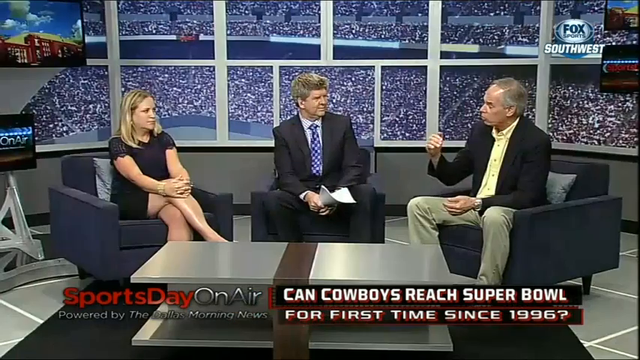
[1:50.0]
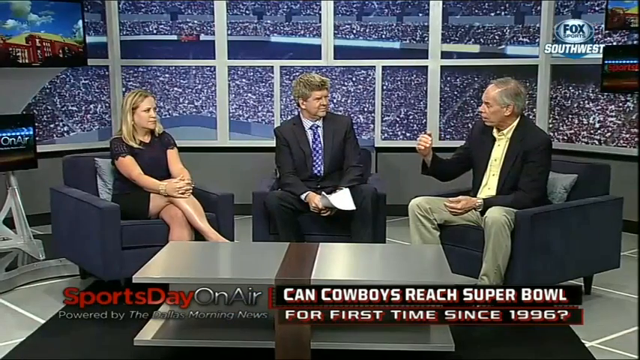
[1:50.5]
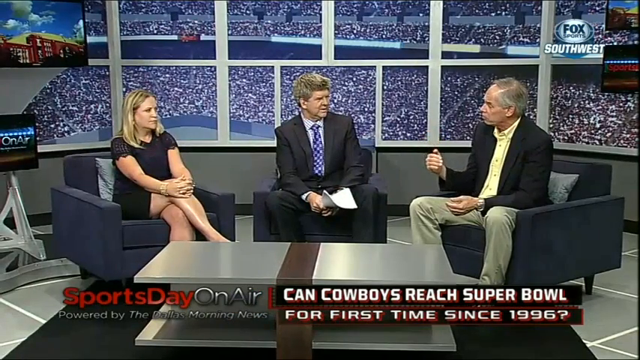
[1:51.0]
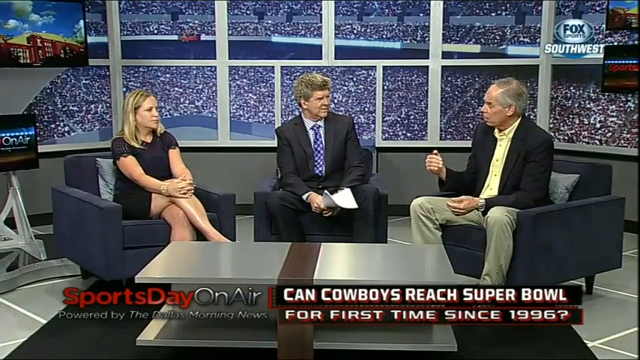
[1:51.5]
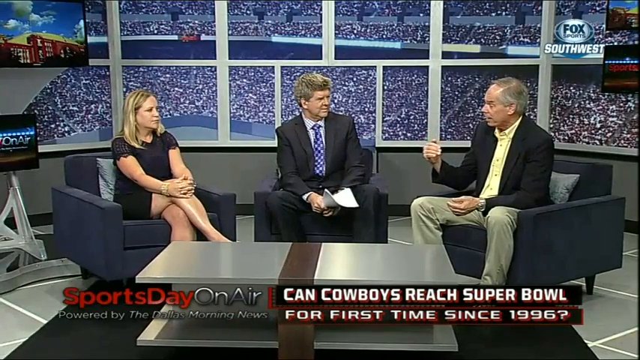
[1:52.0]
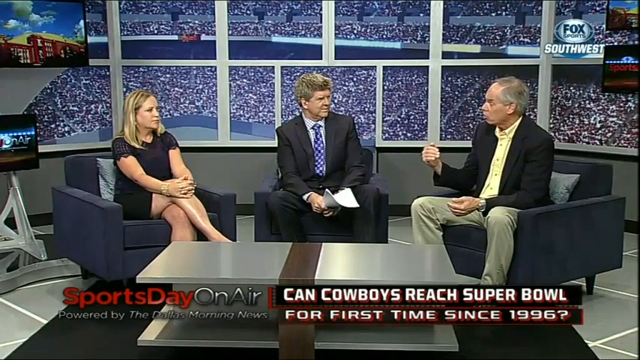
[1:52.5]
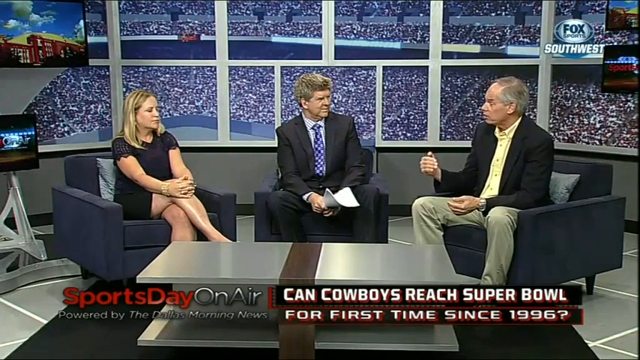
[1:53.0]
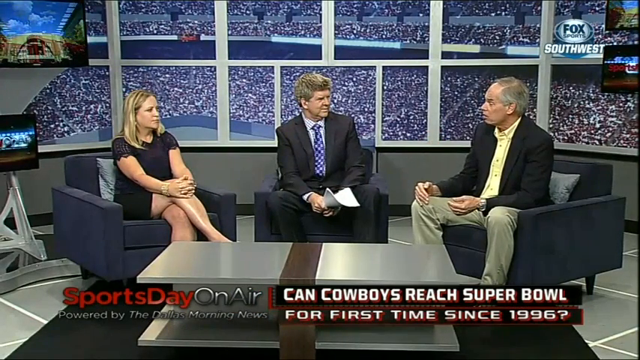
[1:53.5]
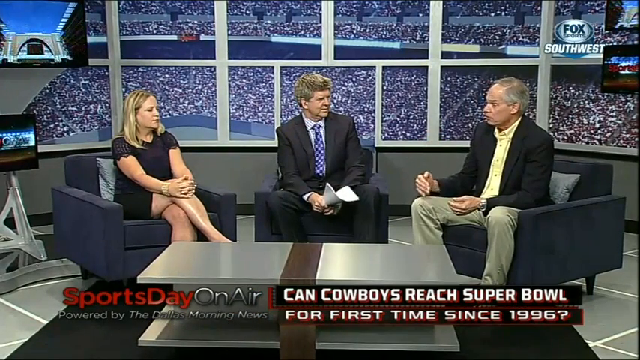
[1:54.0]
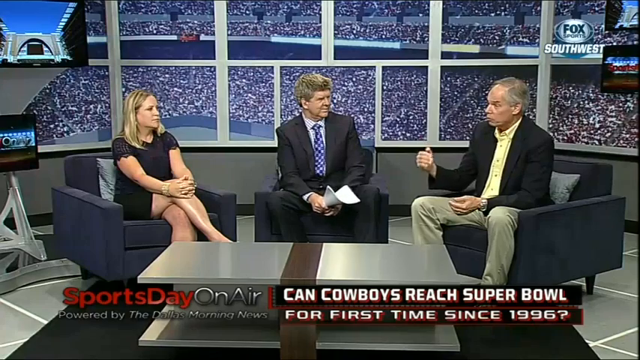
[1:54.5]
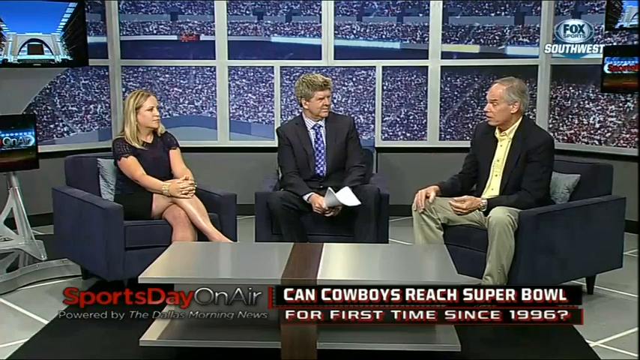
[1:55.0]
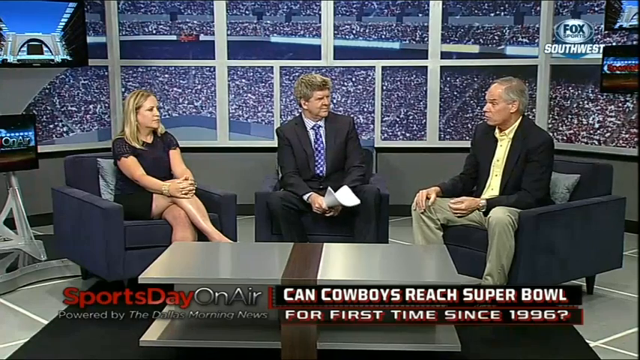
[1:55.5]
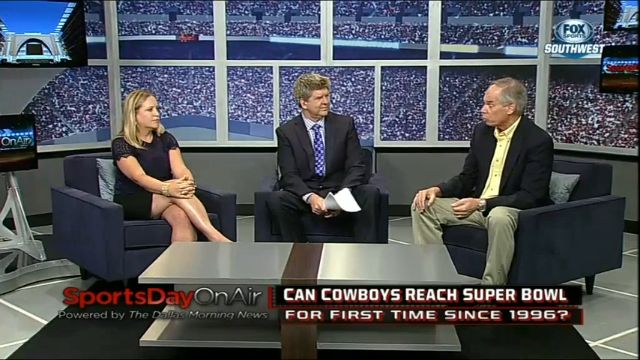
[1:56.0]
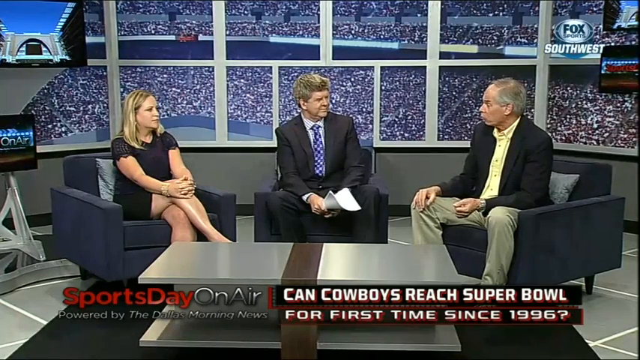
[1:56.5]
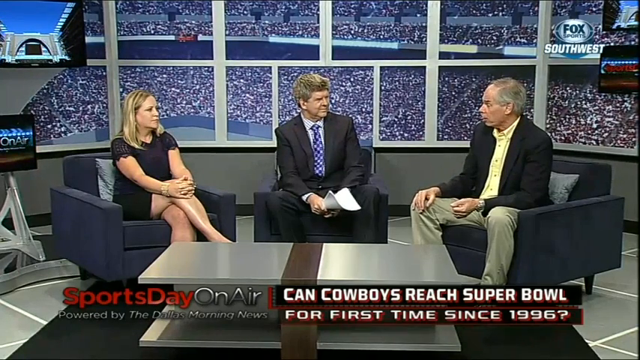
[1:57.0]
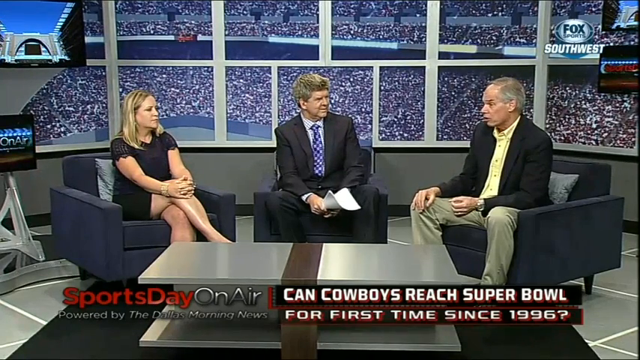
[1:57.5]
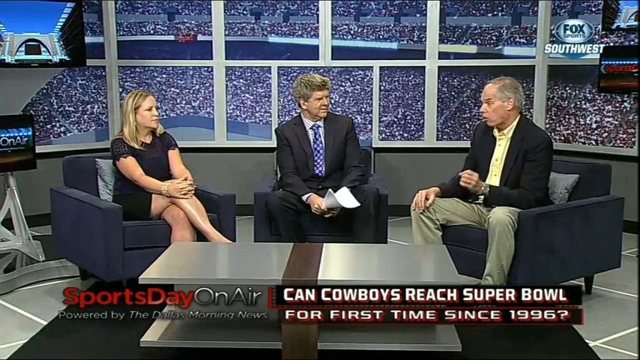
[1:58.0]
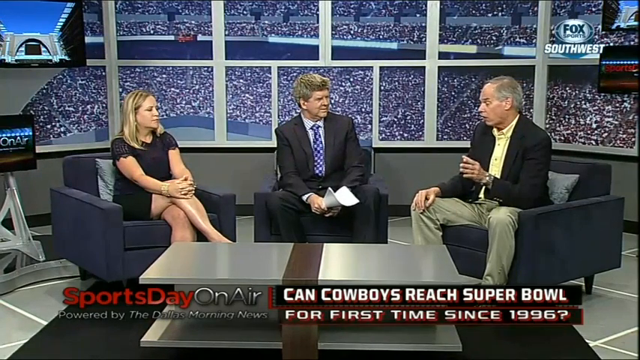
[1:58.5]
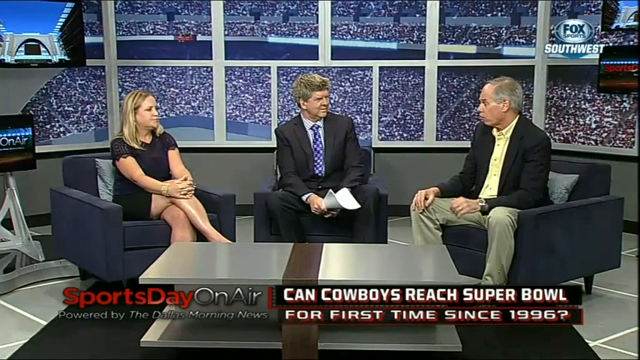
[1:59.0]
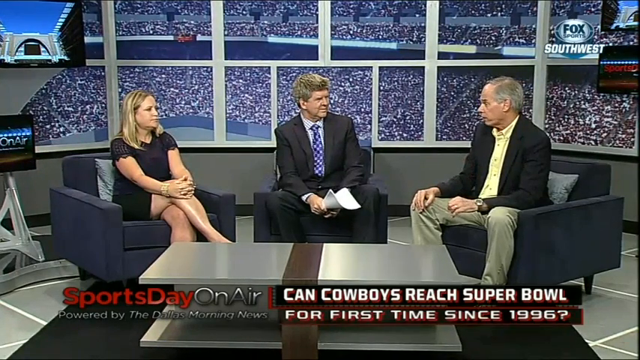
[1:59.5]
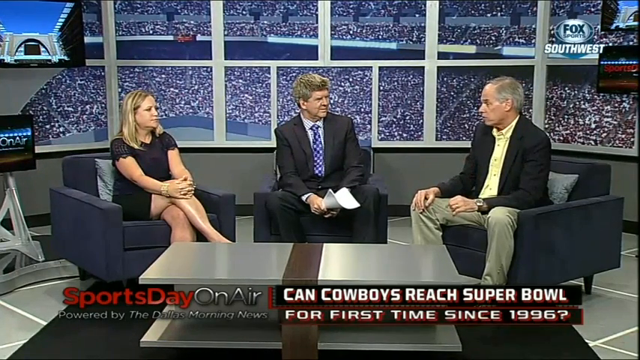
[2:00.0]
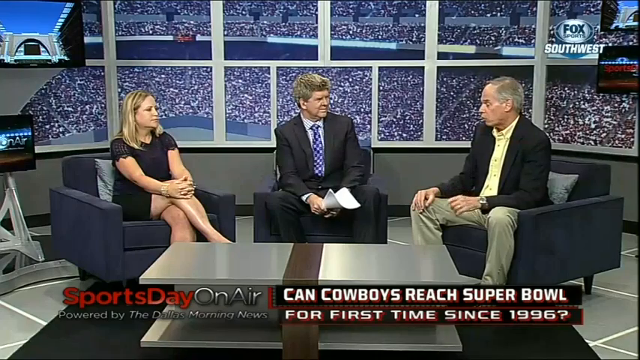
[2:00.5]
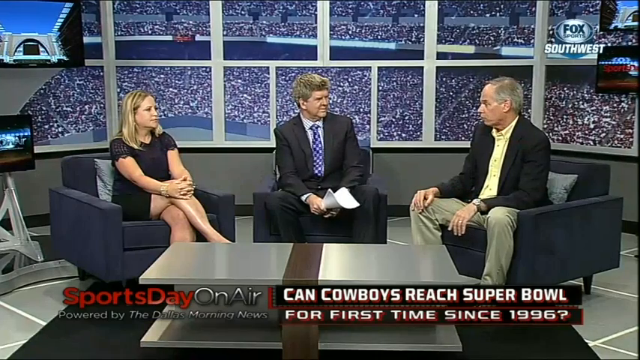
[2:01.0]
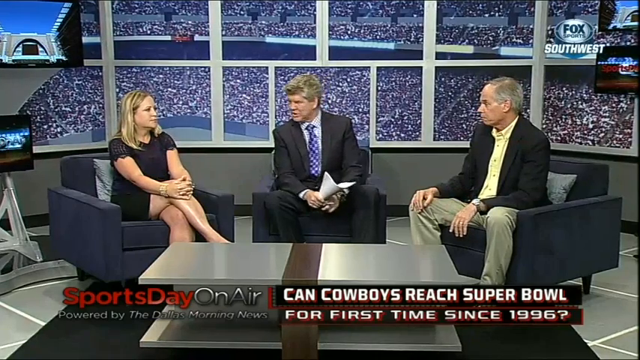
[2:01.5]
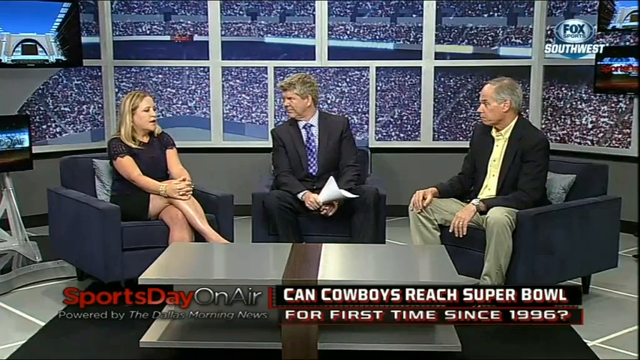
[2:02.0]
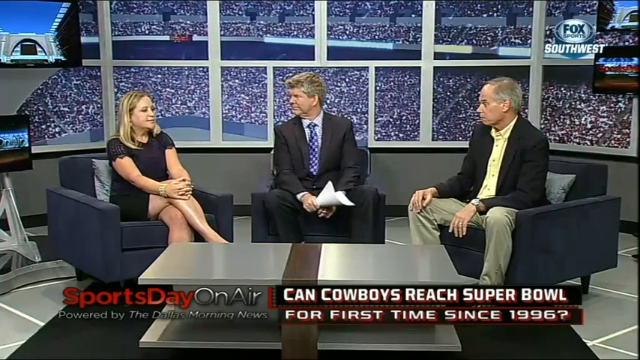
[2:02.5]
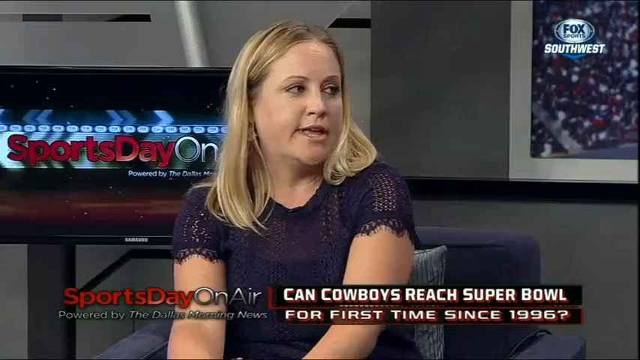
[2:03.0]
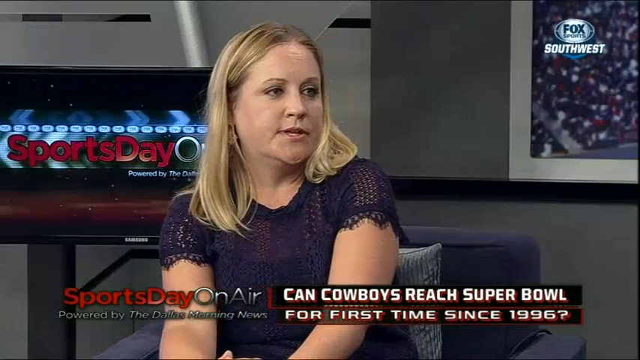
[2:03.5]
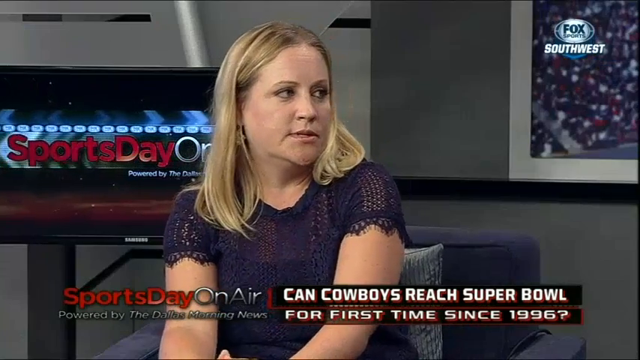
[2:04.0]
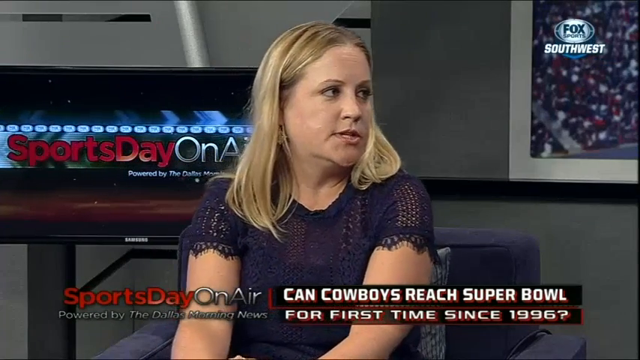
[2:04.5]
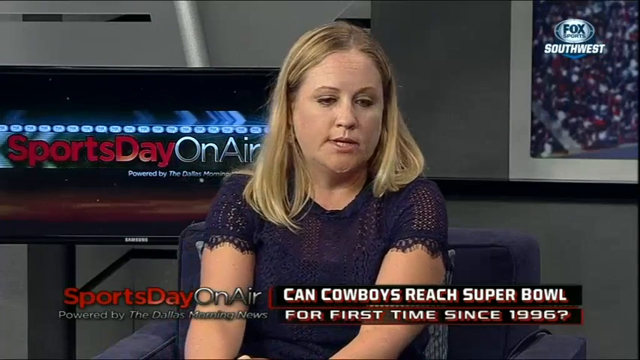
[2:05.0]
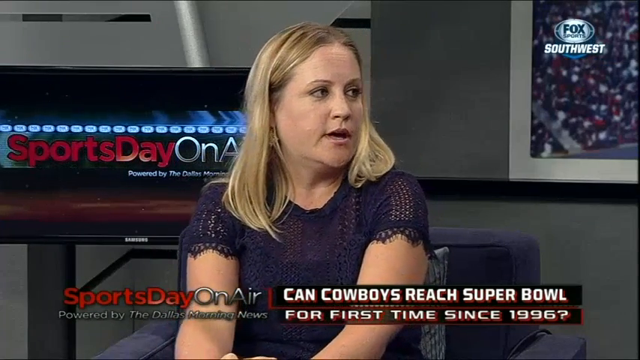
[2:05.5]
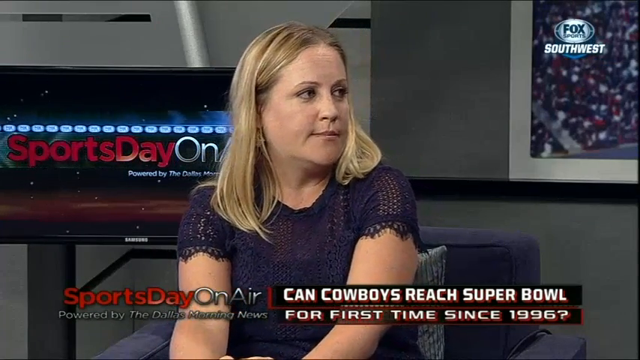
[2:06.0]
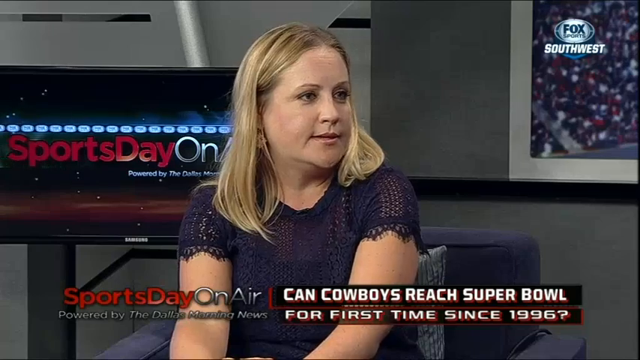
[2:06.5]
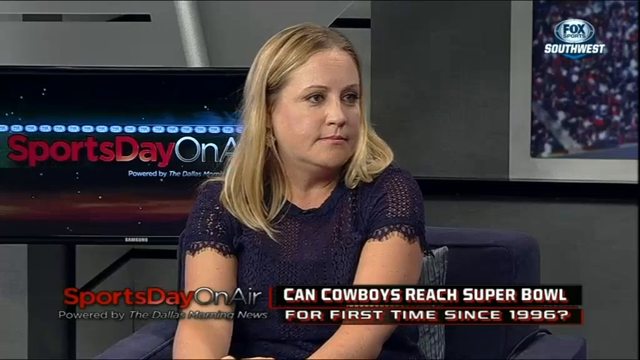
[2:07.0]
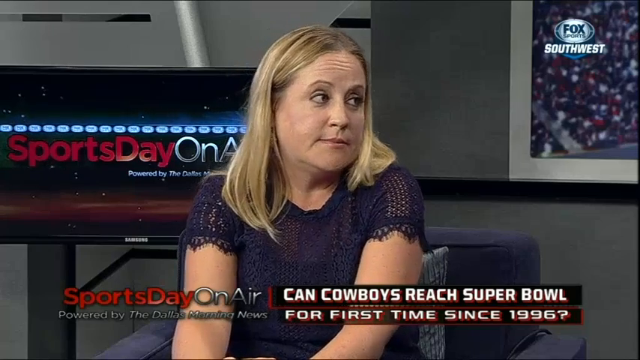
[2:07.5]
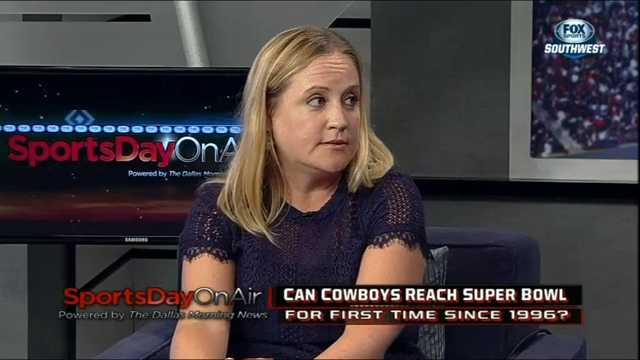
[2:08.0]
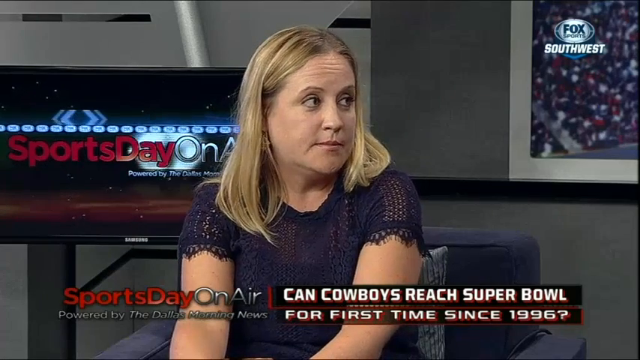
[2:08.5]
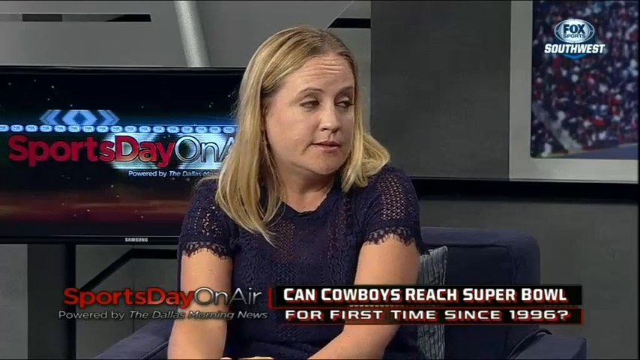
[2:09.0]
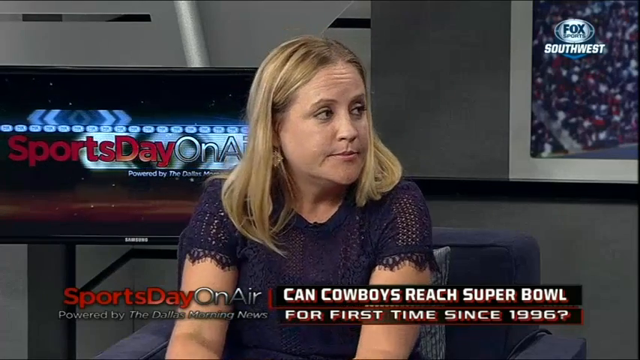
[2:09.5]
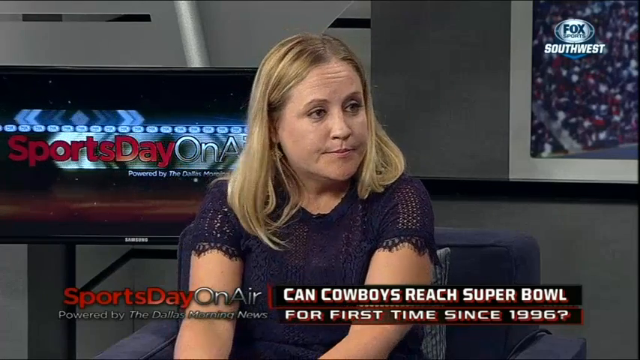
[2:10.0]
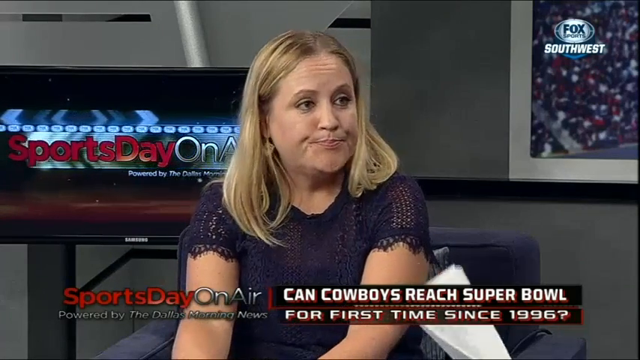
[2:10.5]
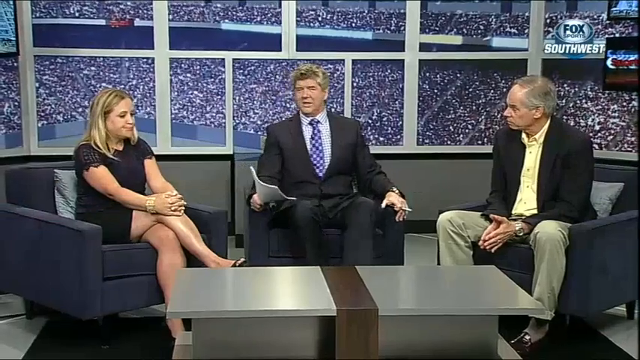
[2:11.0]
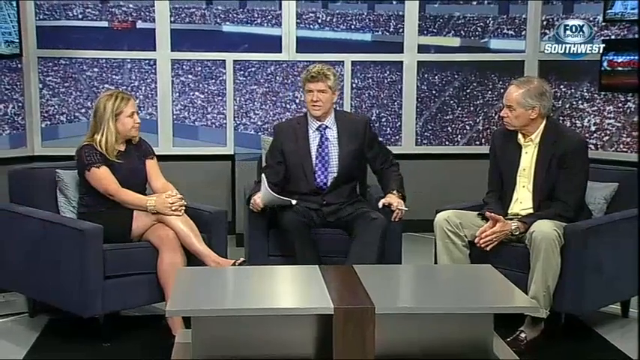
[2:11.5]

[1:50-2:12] The view pans to the three of them, and the man in yellow is still talking, moving his right hand in a curved manner with his hand cupped a little. The man in the middle sort of reacts and turns over to the woman. The woman replies to the man in the middle and also looks at the other man. The camera zooms in on her as she nods her head and replies to both men; her legs are still crossed and her hands interlaced. Behind her is a monitor on a stand, with a brownish, kind of blurry background near the bottom of the monitor and very bright lights at the top sort of moving from the middle to the ends. Behind the Sports Day logo, other lights also move from the middle toward the left and right ends at the same time.